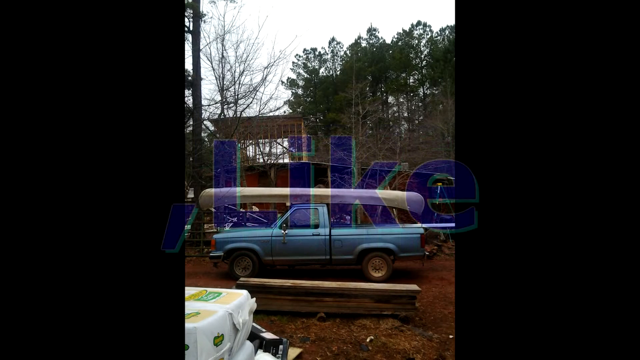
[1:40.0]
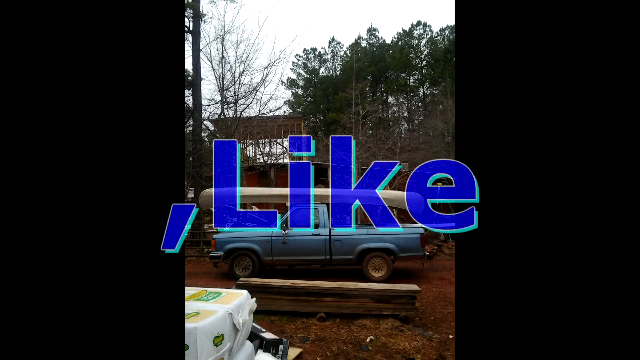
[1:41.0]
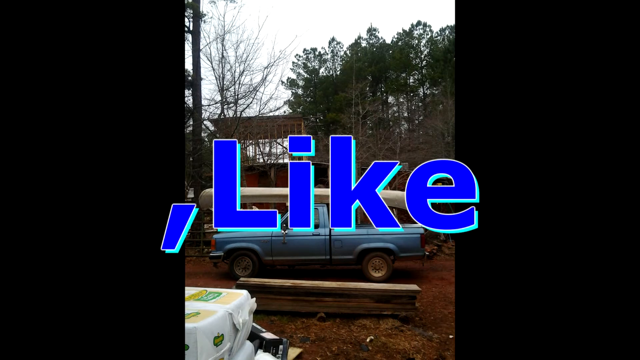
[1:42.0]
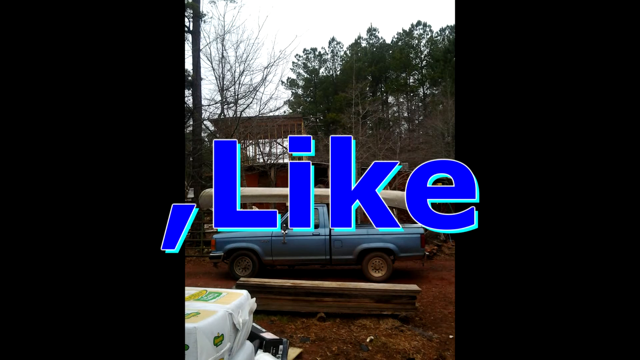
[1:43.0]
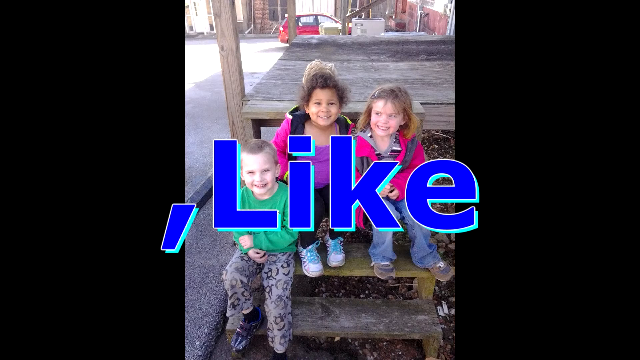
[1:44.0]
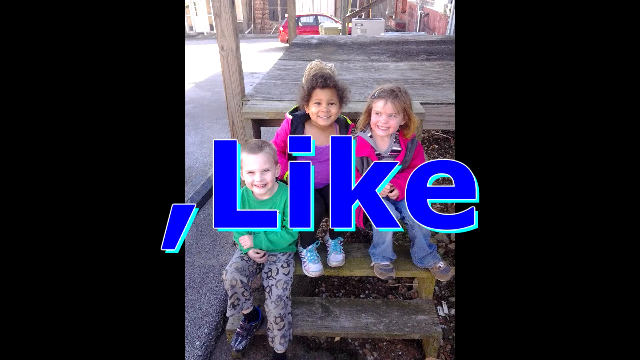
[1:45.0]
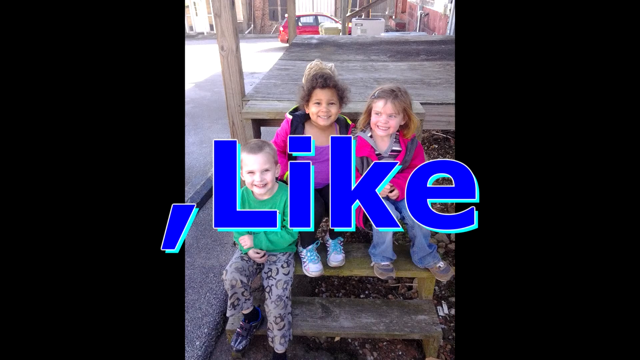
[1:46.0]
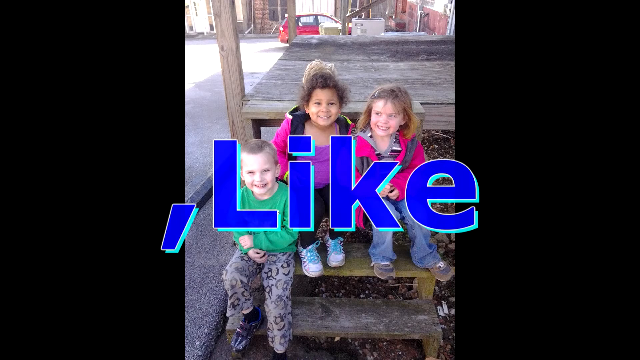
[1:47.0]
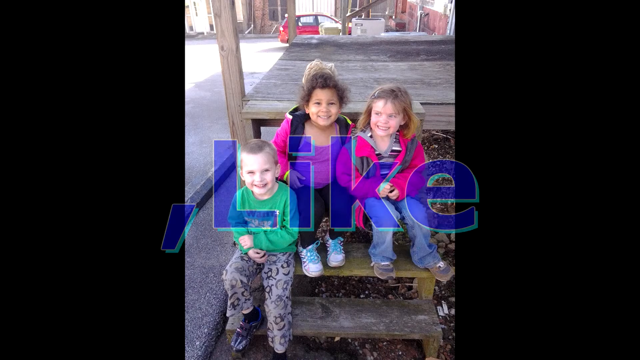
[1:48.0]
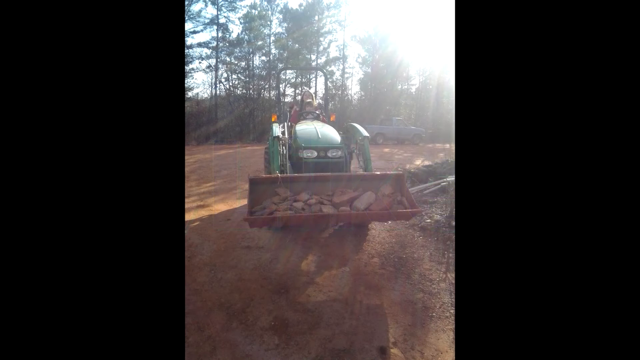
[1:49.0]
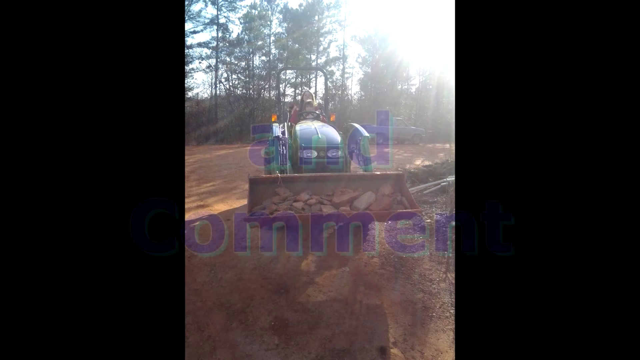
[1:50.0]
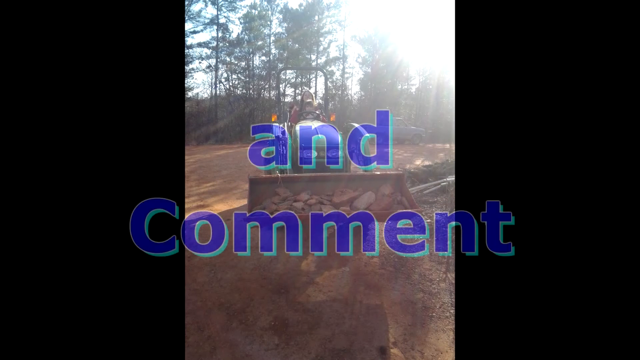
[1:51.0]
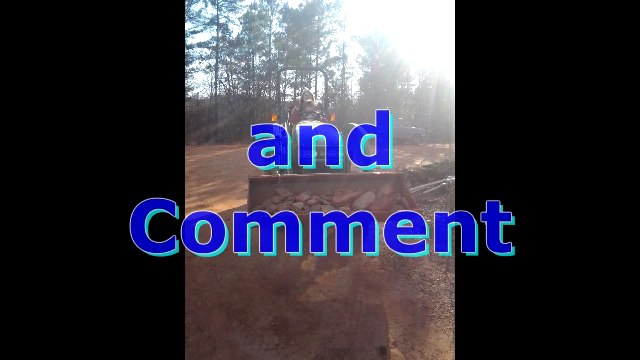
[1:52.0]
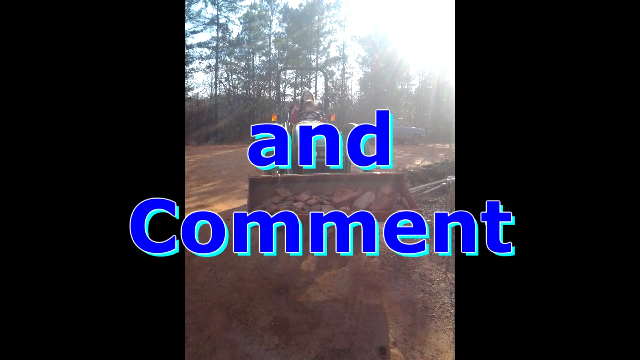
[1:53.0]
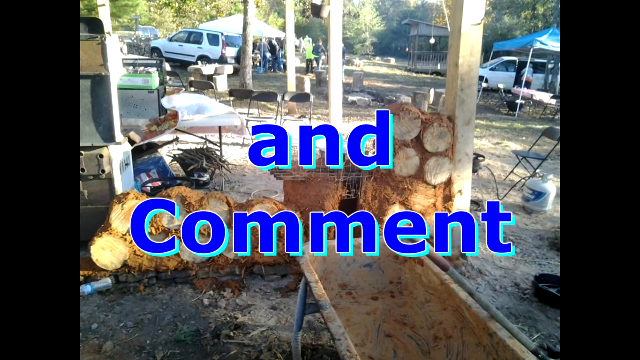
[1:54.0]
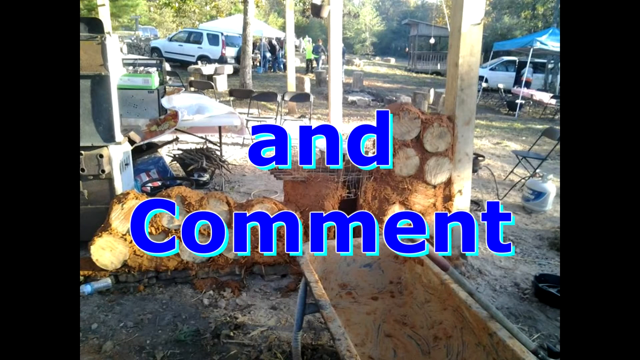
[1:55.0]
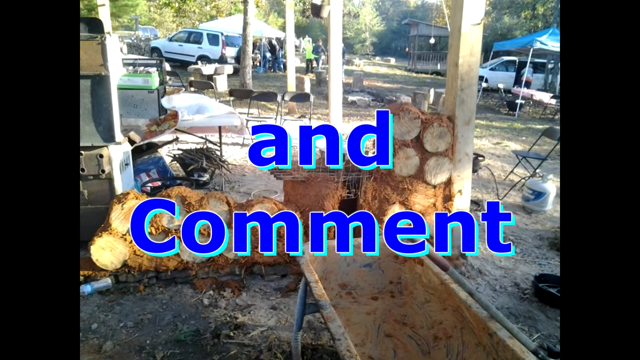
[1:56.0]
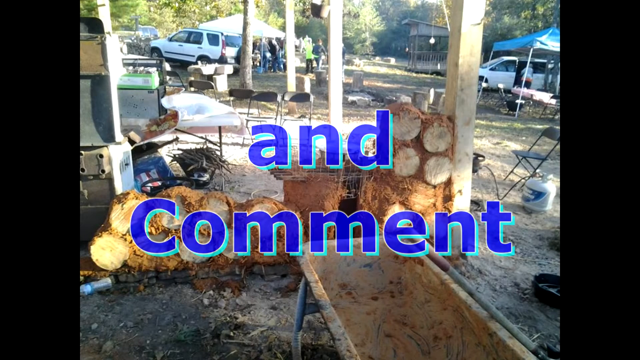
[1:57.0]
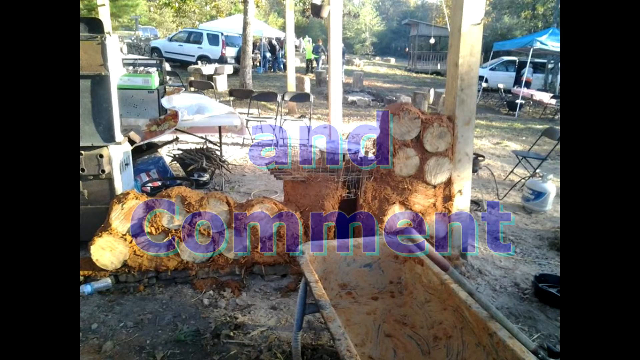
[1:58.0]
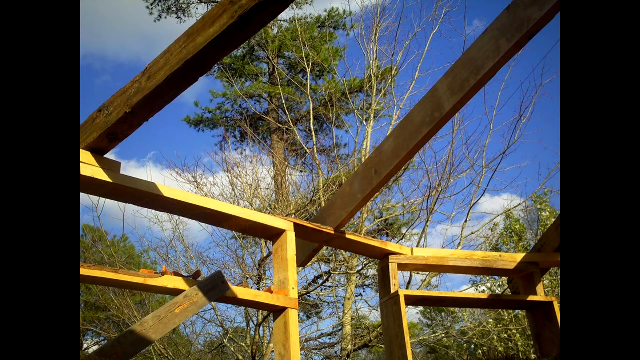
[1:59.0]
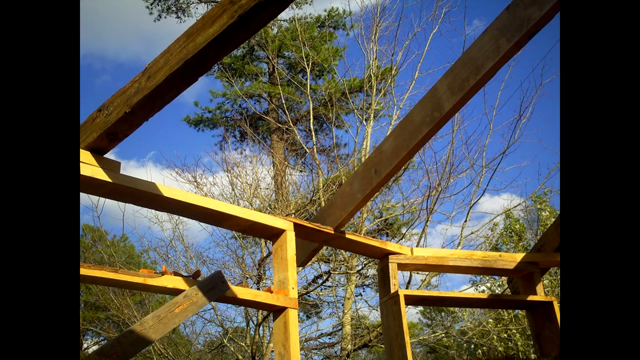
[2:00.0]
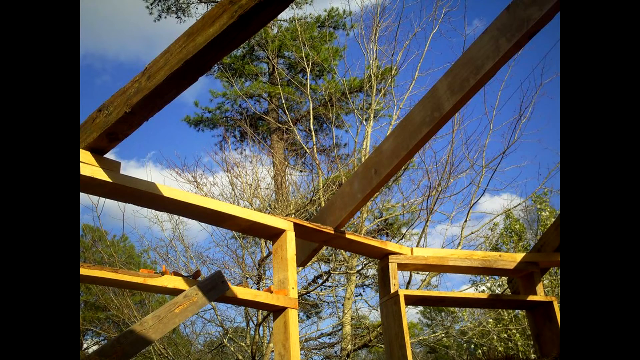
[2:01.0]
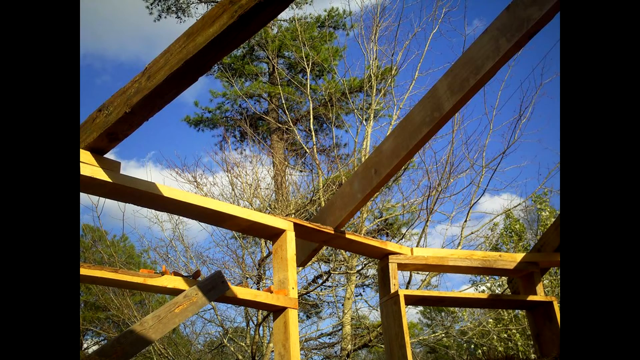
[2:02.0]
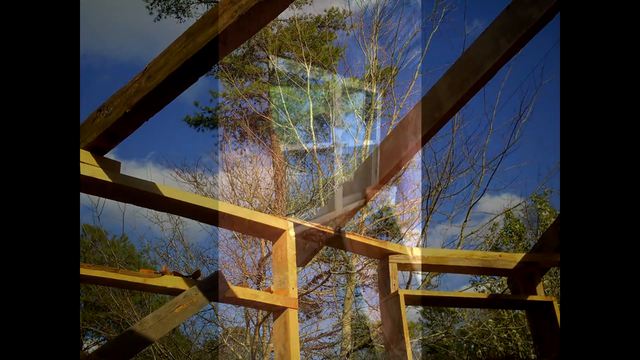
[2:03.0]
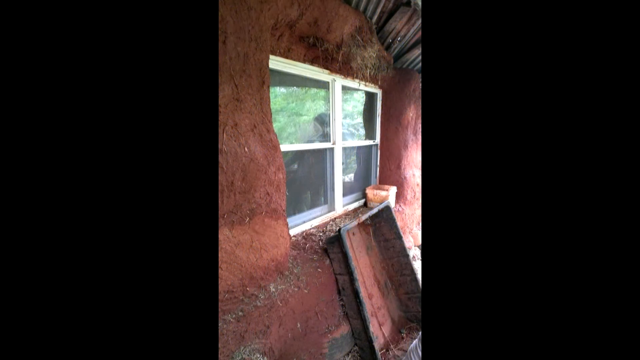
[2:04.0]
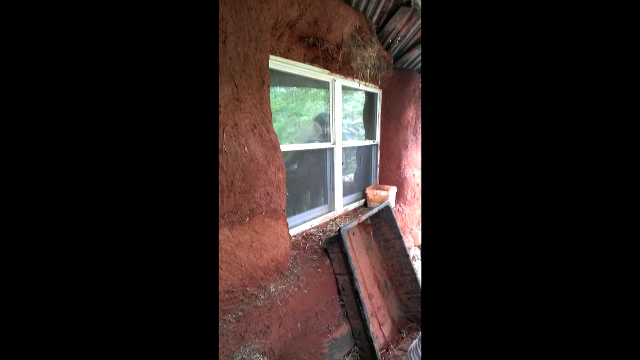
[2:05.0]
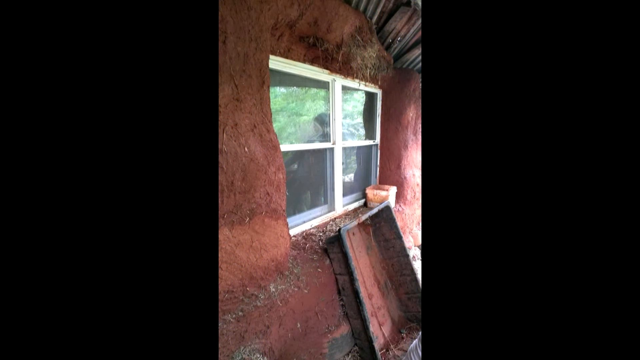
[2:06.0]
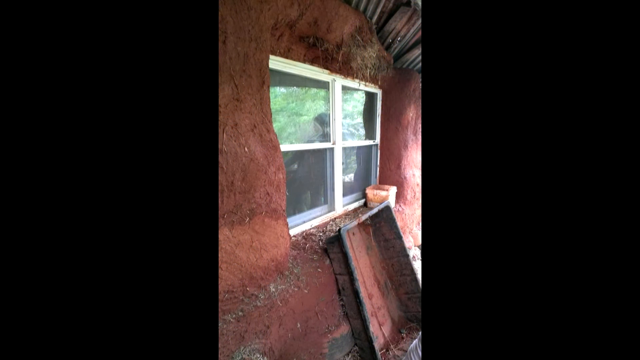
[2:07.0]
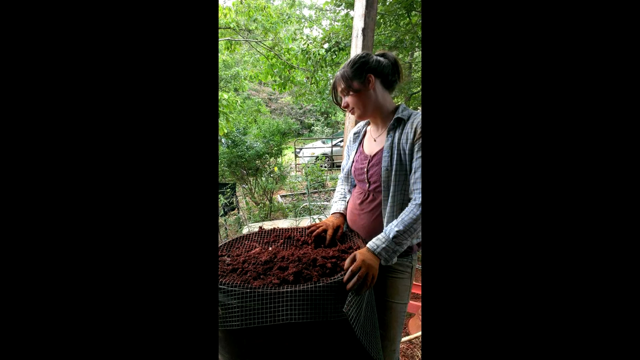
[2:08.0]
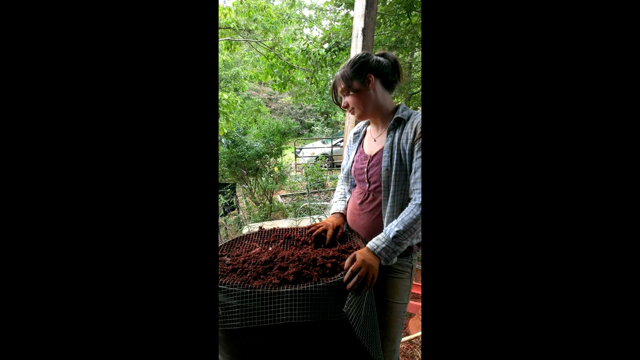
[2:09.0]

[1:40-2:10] An image shows a blue van in the background of what looks like the backyard of the area, with what looks like a treehouse at the bottom of the image and tall forest trees on the right-hand side. The blue van is in the middle of the shot as blue text reading "like" appears on screen. Another image shows kids sitting on what looks like a wooden bench, with a red car in the background. A shot of a child follows with blue on-screen text reading "add comment", and a bright sun is in the top right. Shots then show pieces of dirty wood and construction, followed by what looks like a mud house with windows, and then a woman.